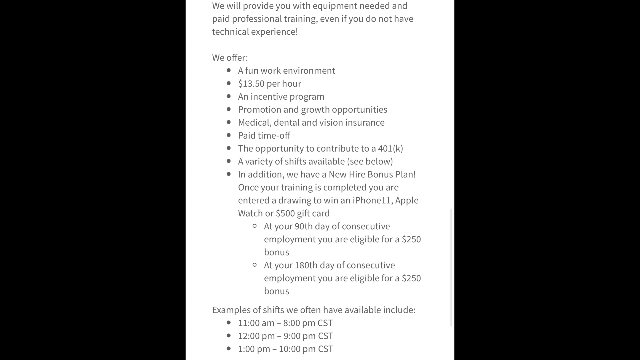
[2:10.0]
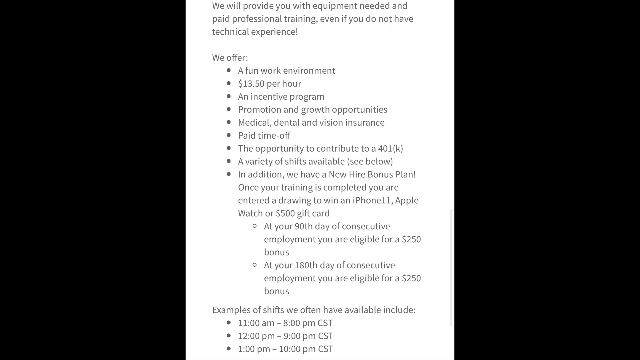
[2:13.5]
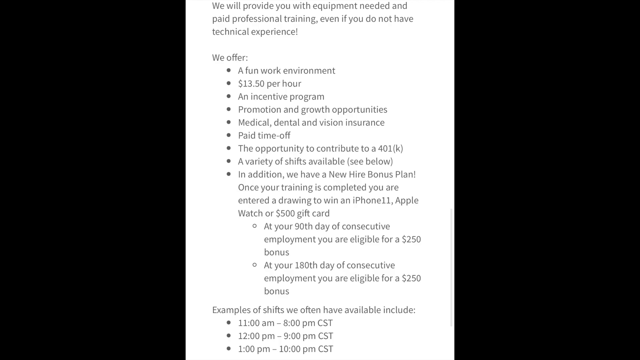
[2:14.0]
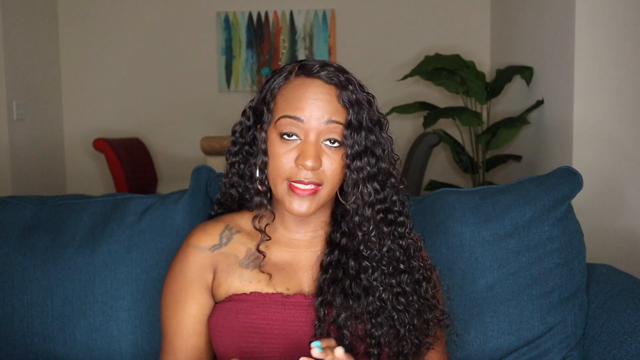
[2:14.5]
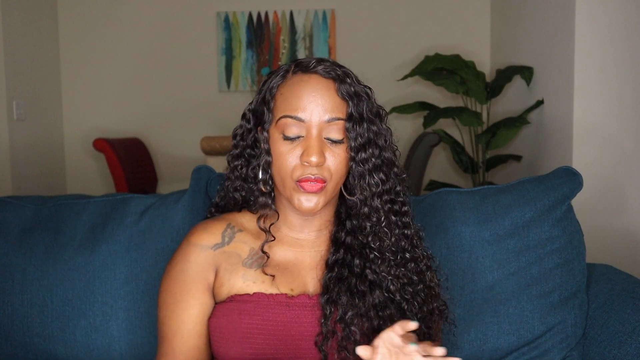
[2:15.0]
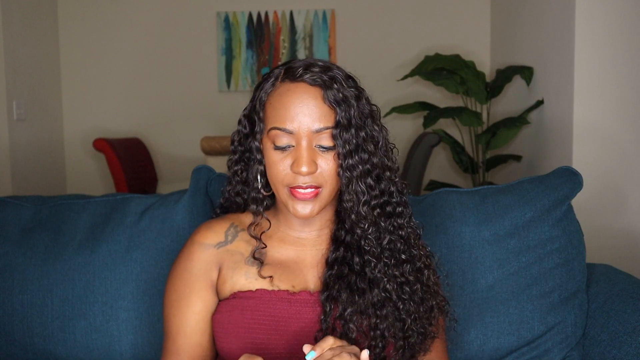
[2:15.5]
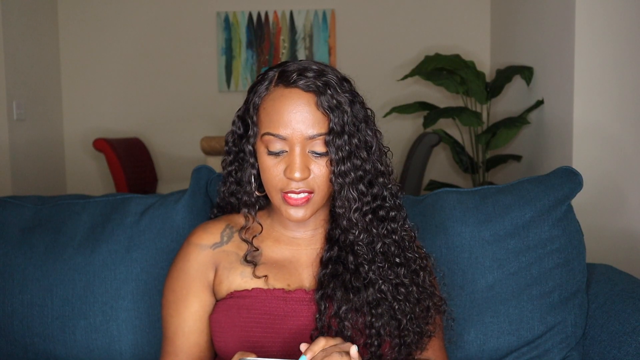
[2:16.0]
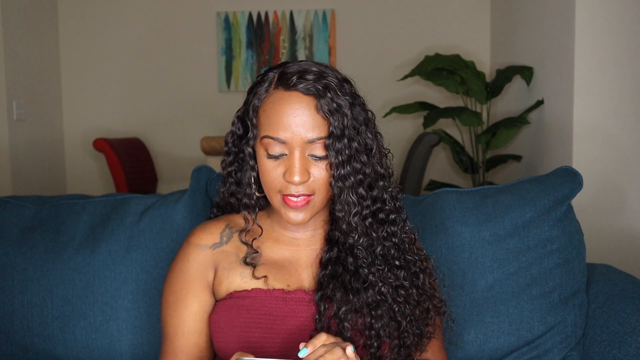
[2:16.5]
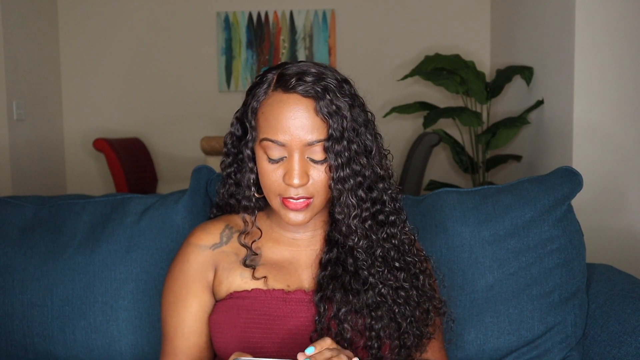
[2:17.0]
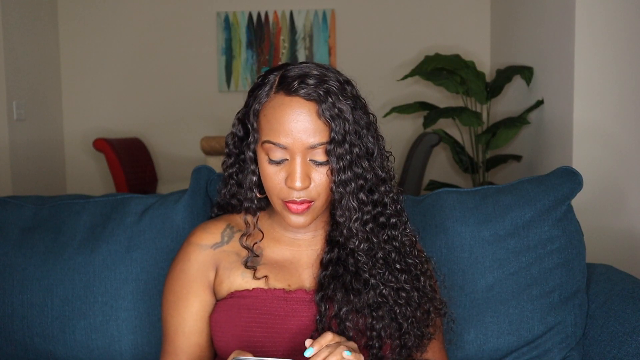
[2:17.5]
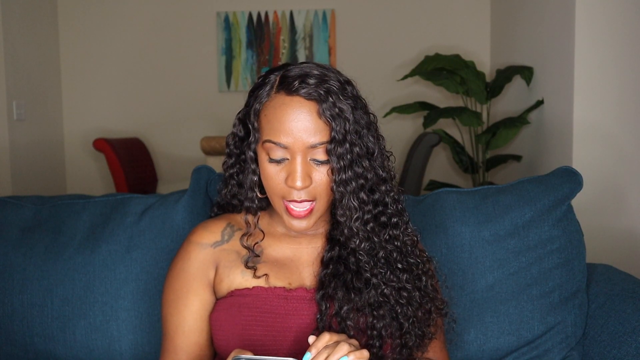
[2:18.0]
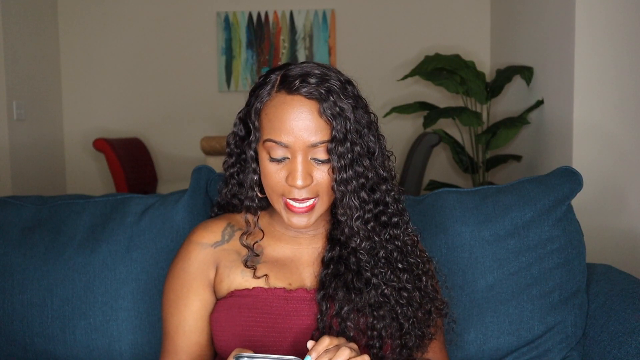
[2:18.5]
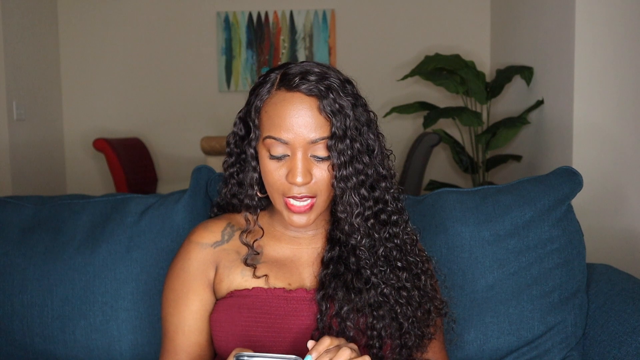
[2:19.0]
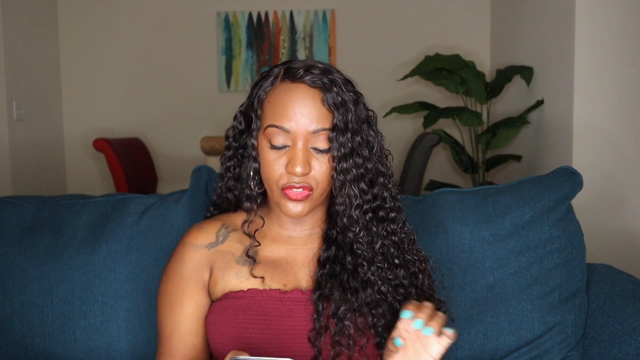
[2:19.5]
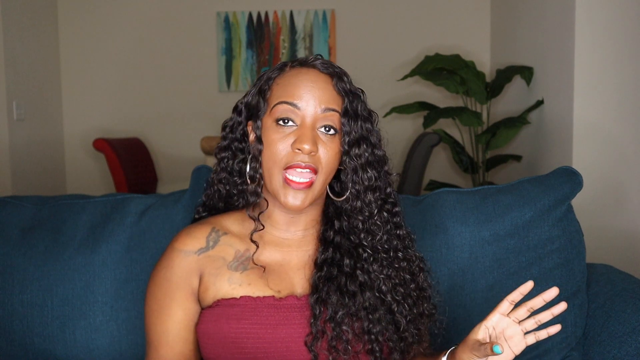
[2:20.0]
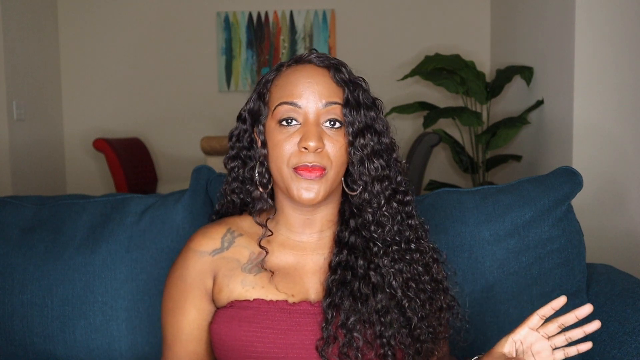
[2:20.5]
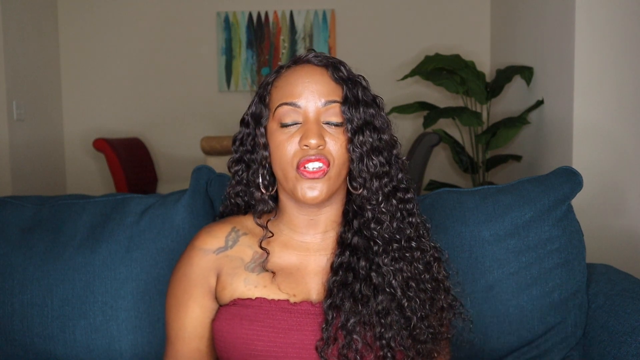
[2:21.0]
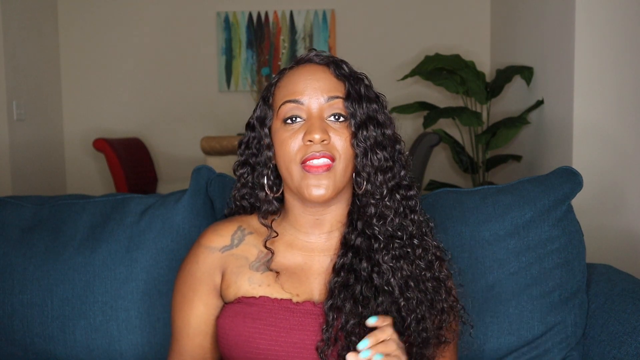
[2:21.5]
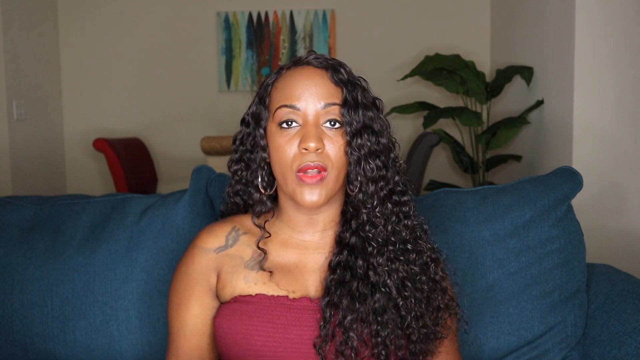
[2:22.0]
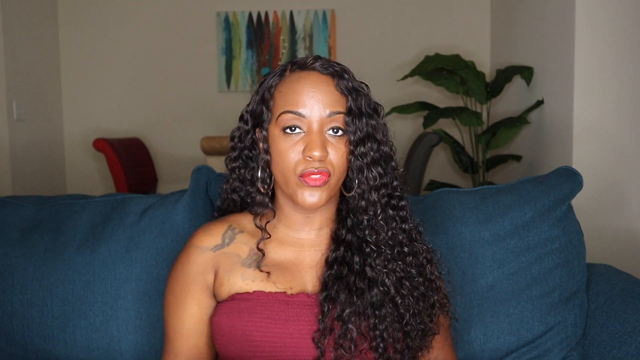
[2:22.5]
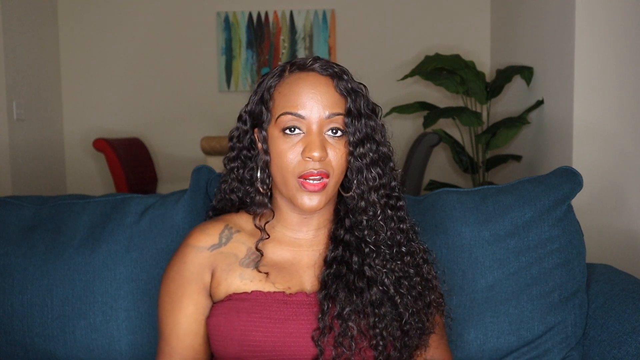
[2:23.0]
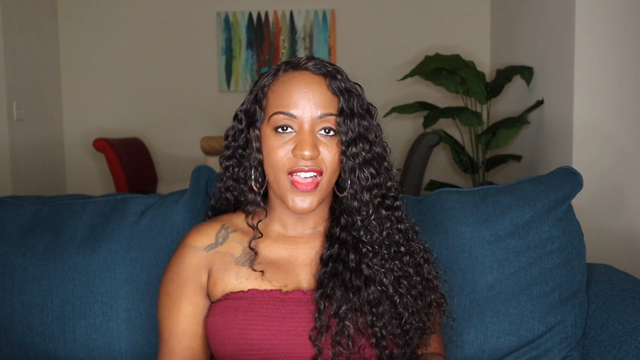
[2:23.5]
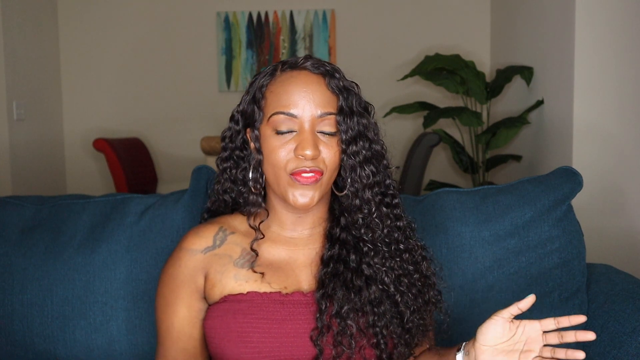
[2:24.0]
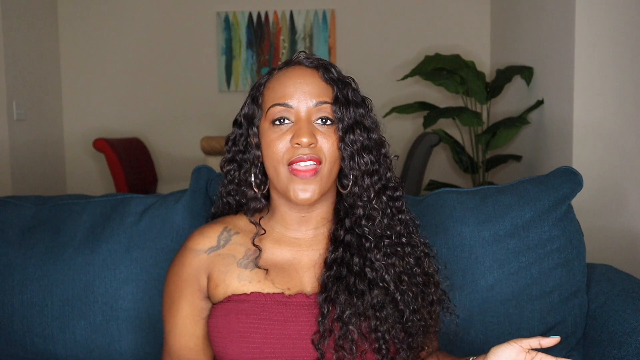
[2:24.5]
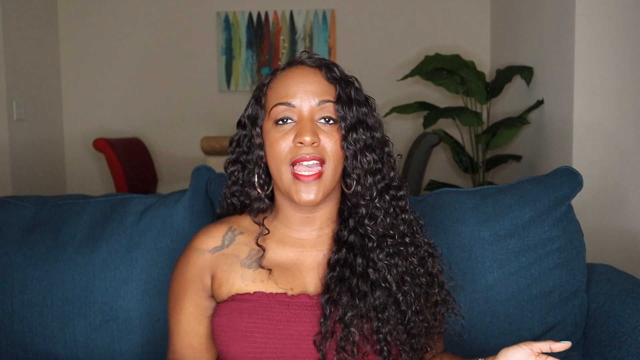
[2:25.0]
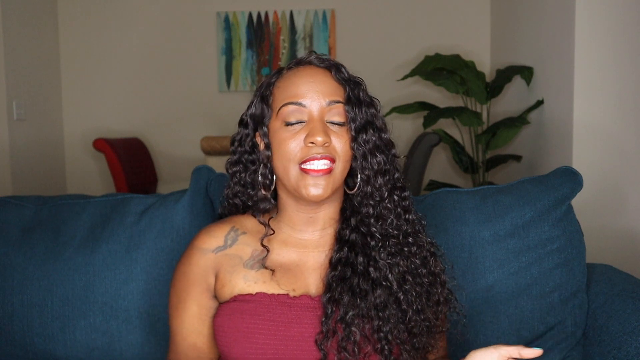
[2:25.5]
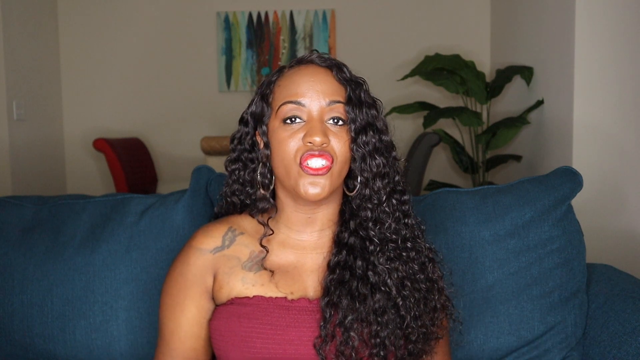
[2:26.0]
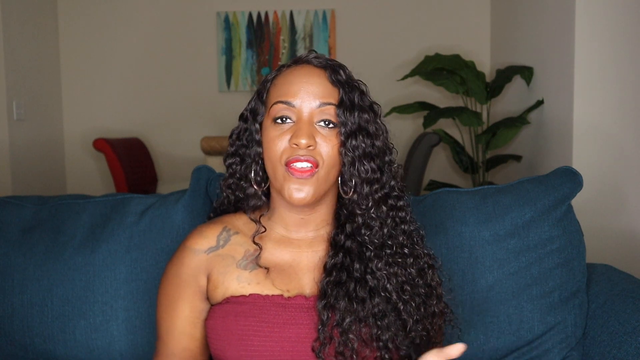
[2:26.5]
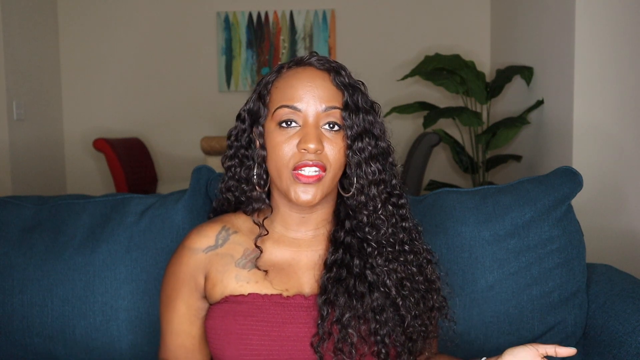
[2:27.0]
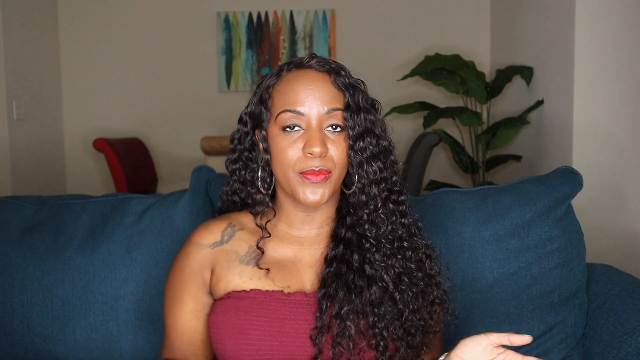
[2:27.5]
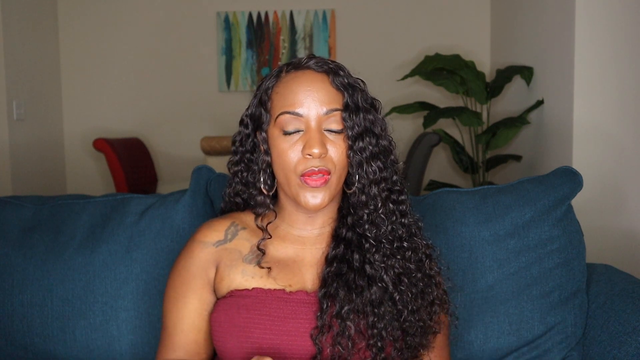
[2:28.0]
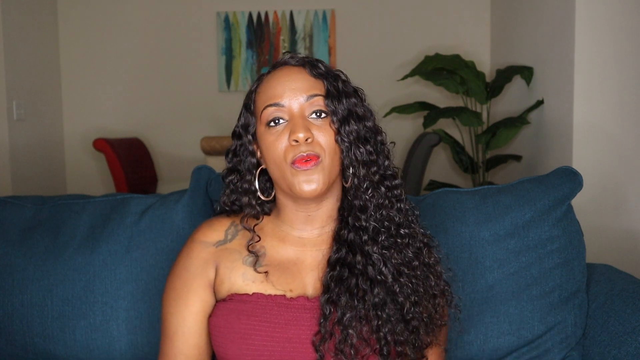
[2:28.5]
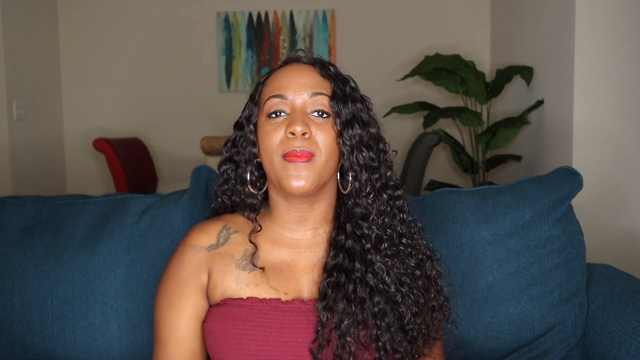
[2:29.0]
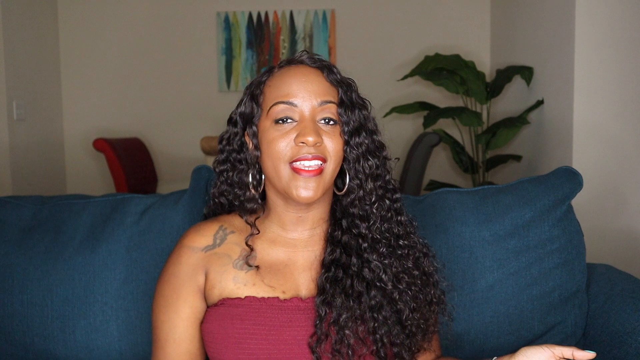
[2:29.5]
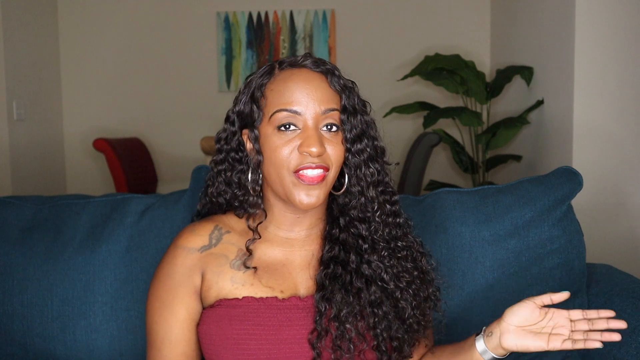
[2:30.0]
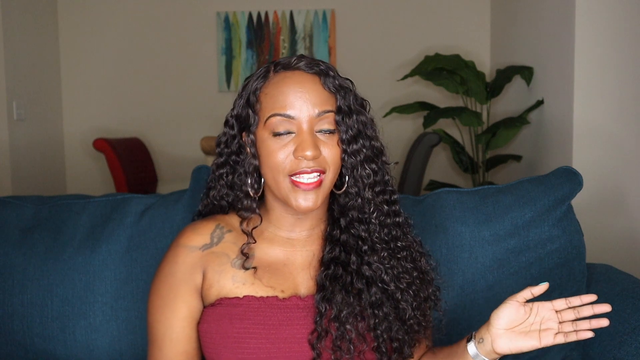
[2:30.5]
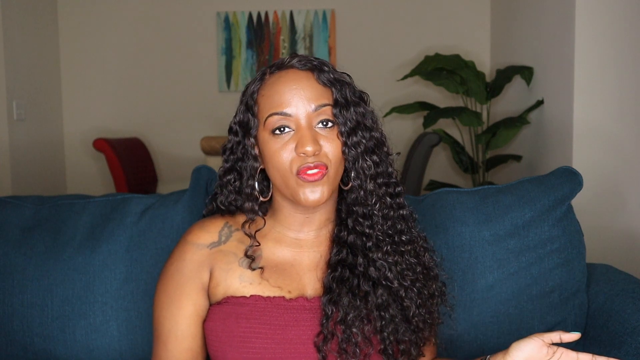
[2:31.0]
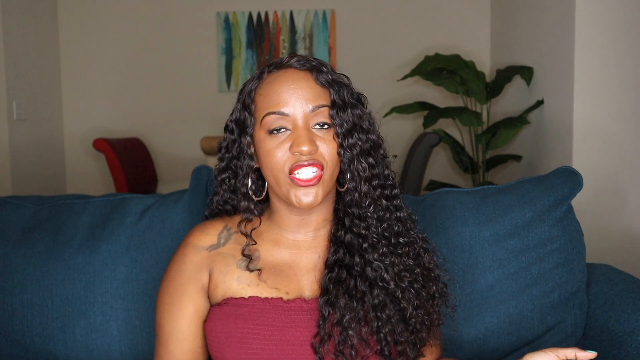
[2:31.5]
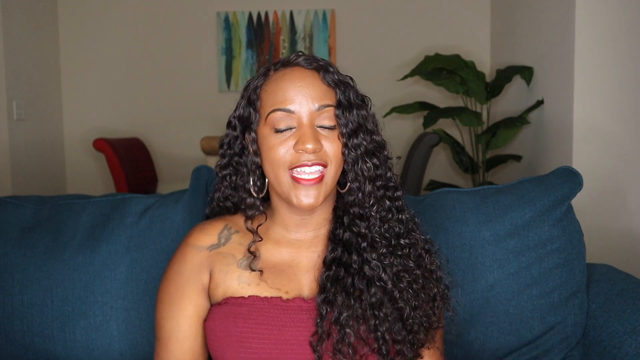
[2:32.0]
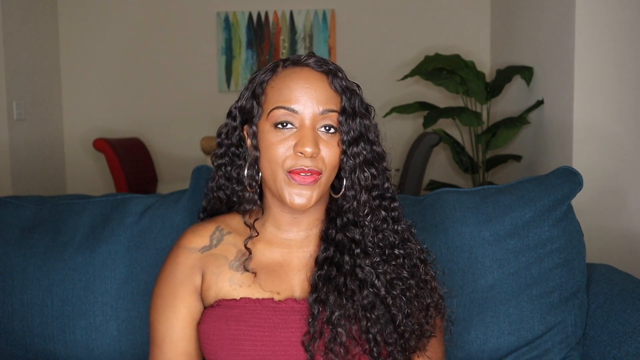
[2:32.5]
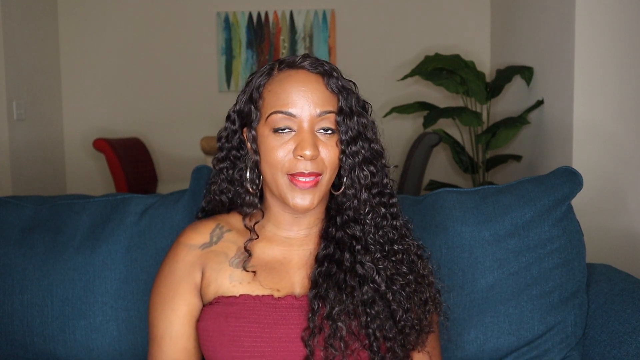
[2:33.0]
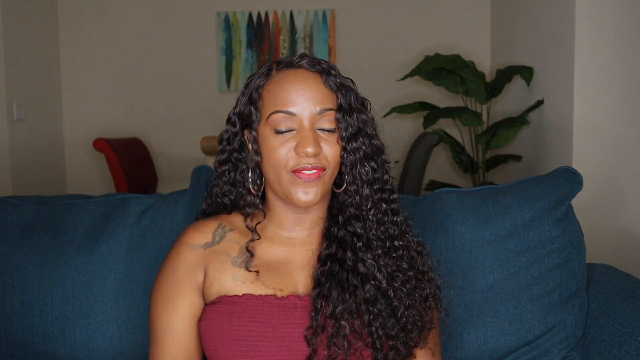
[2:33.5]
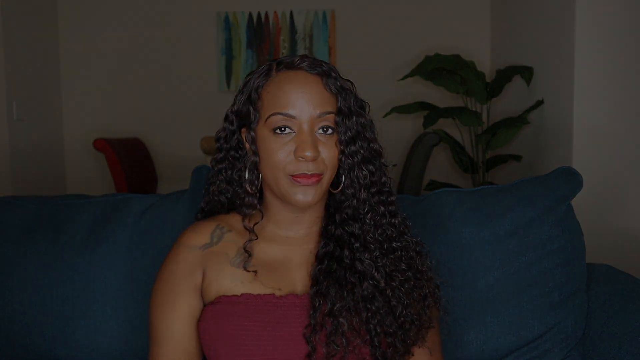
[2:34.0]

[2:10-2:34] Bold words at the start read "love relation, work from home, jobs and more." Next, someone types on an Apple MacBook desktop computer, with one hand on the keyboard and the other on the mouse. A lady then appears in a black weave and a maroon dress, seated on a comfortable sofa in a home setting, with flowers in the background, tables, chairs and a painting on the wall. As she talks, links to Instagram and other social media platforms appear at the bottom.